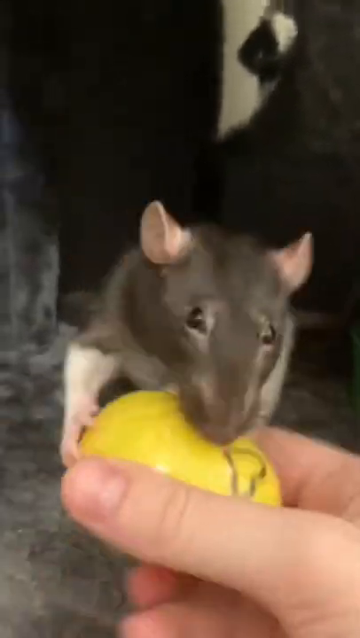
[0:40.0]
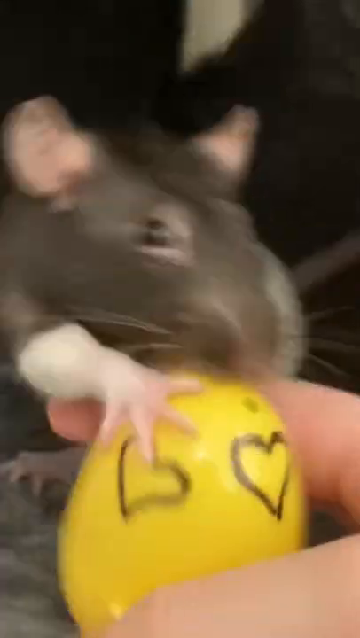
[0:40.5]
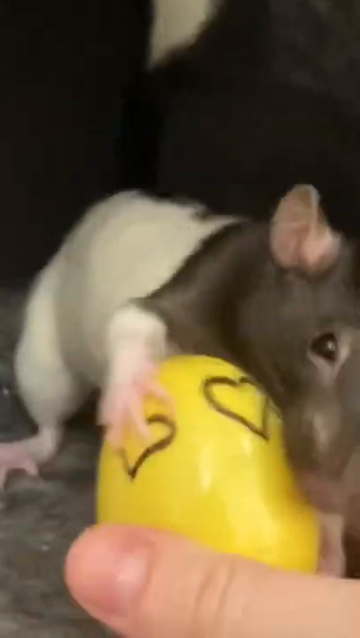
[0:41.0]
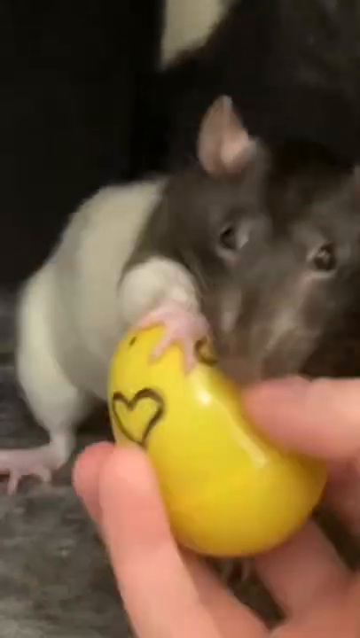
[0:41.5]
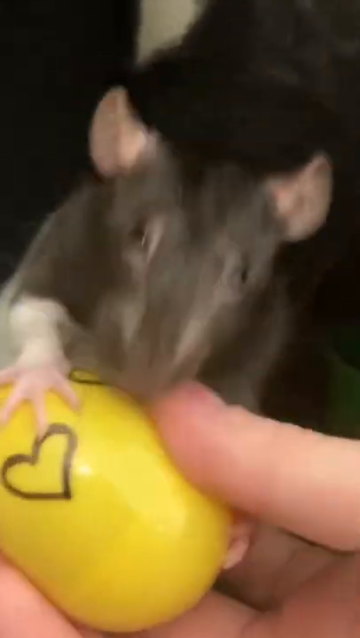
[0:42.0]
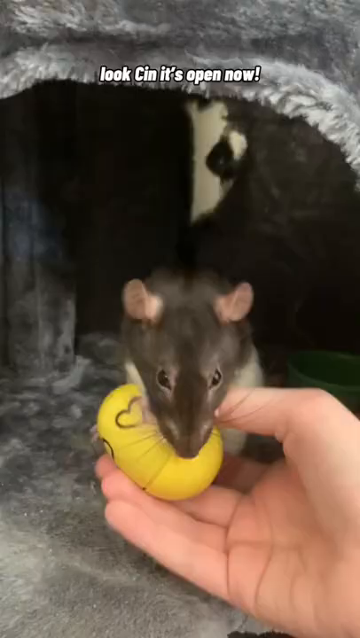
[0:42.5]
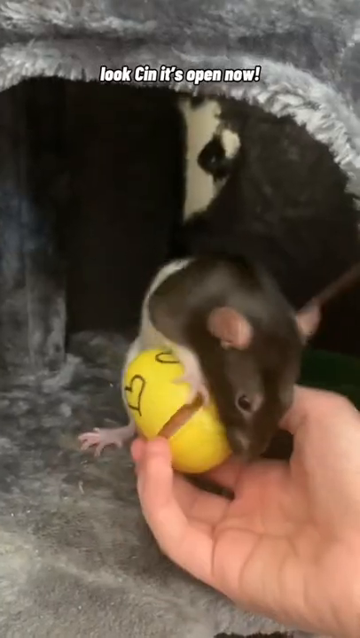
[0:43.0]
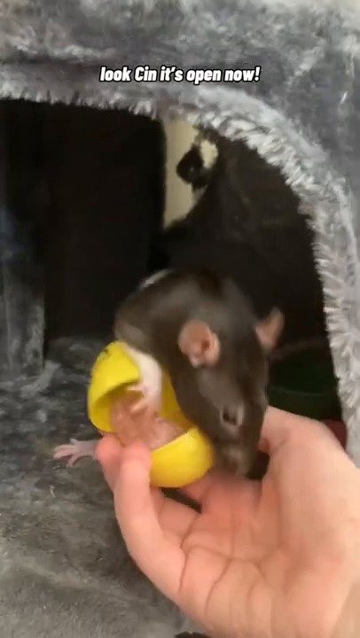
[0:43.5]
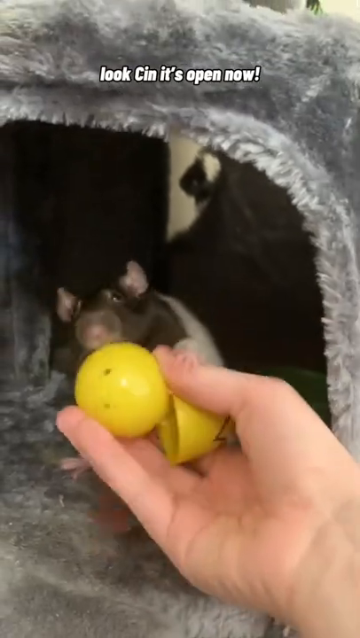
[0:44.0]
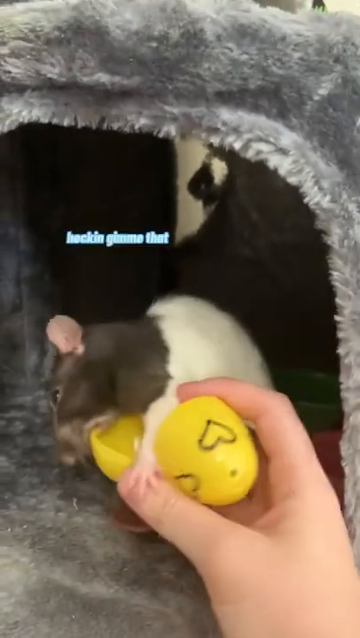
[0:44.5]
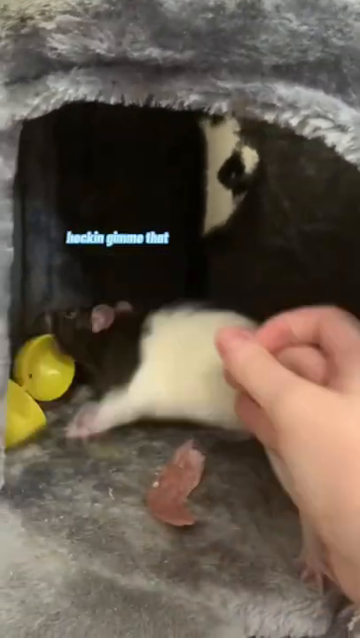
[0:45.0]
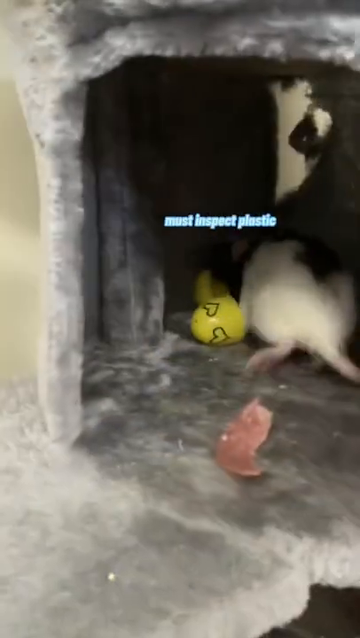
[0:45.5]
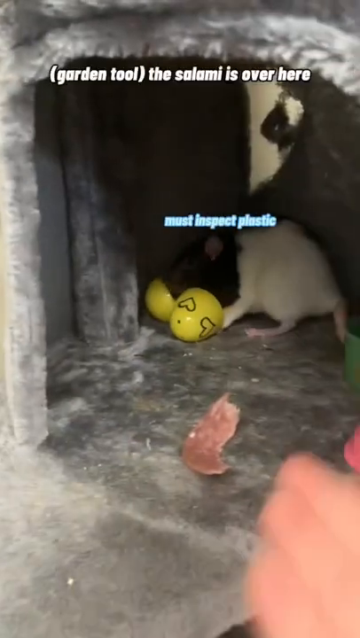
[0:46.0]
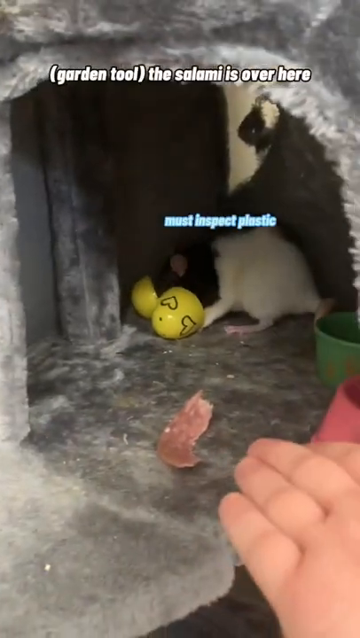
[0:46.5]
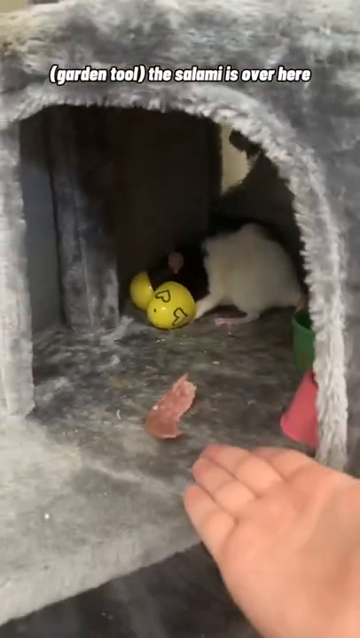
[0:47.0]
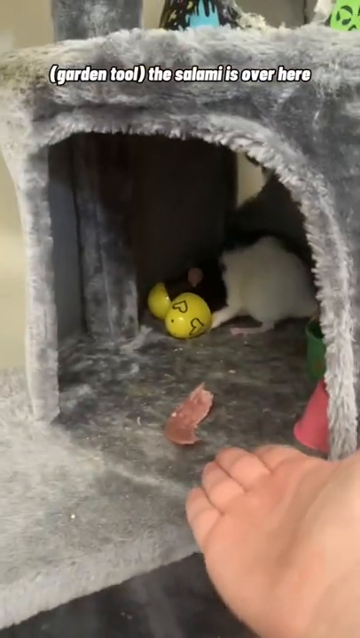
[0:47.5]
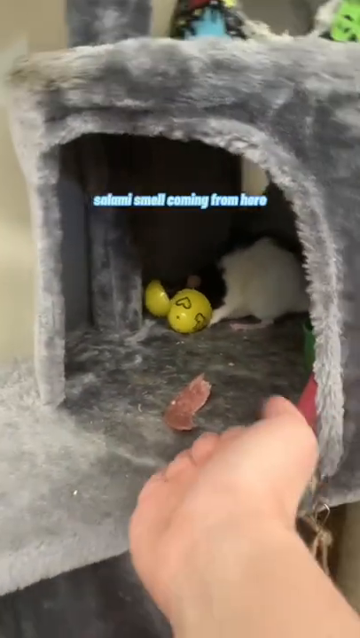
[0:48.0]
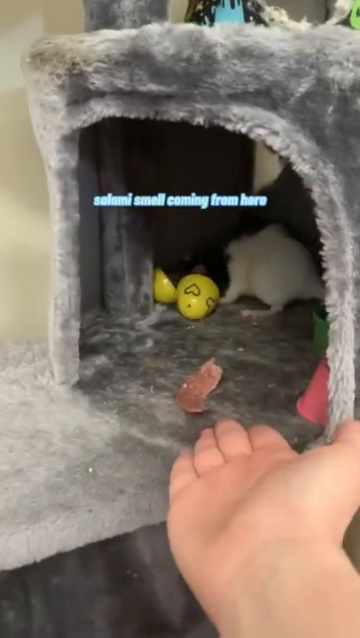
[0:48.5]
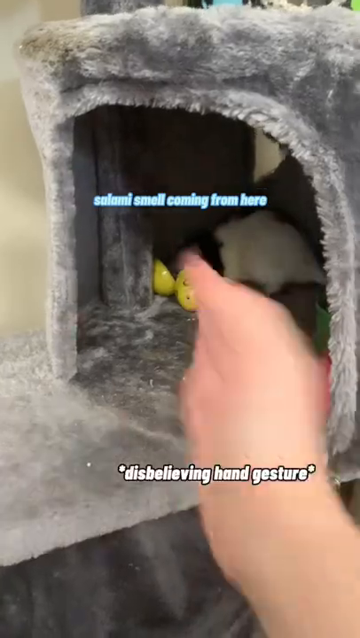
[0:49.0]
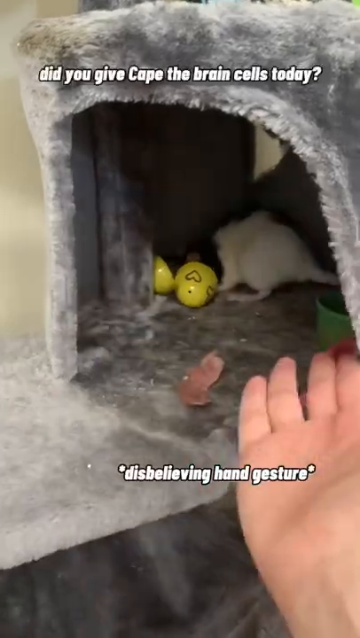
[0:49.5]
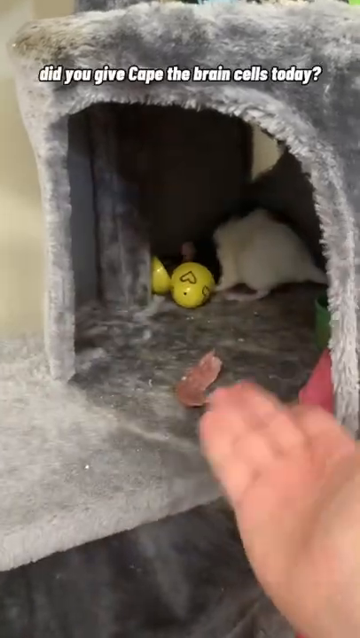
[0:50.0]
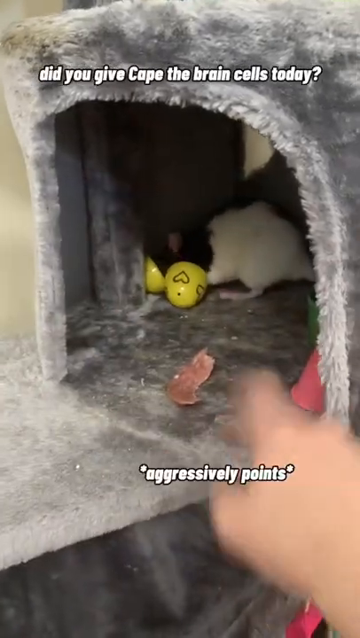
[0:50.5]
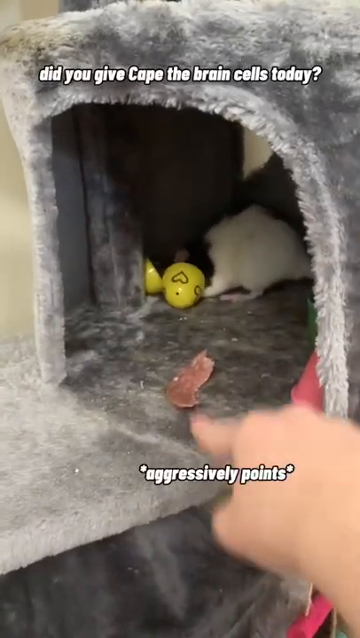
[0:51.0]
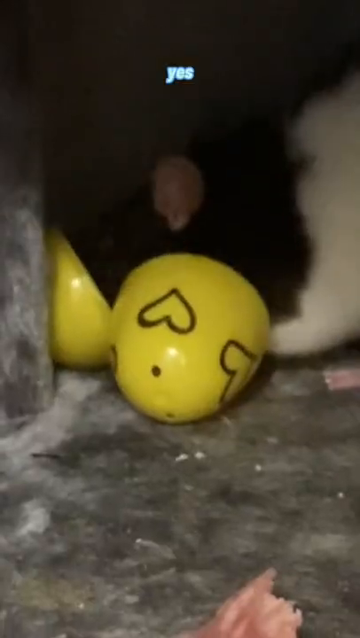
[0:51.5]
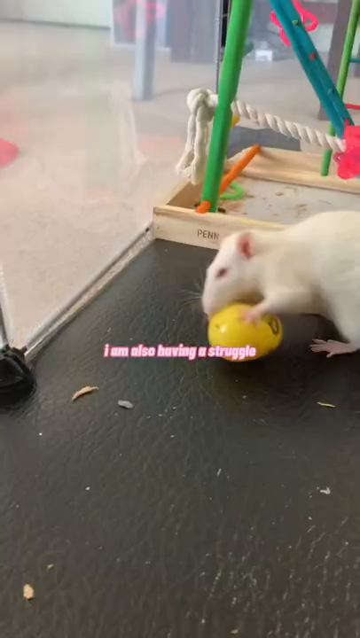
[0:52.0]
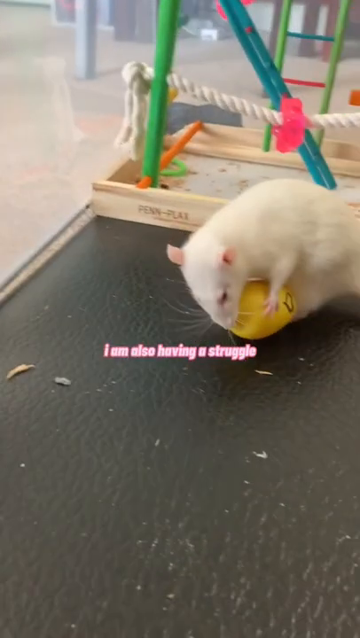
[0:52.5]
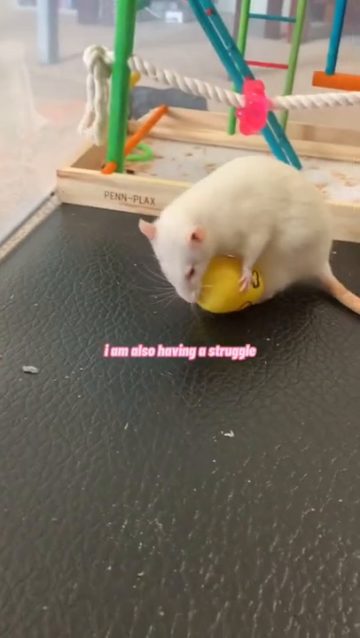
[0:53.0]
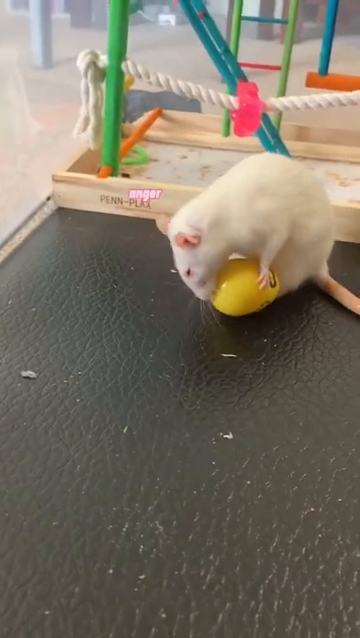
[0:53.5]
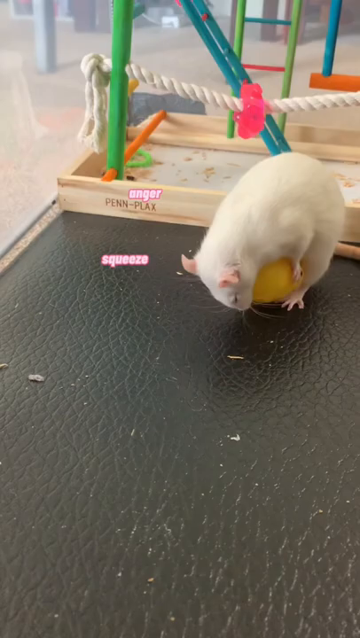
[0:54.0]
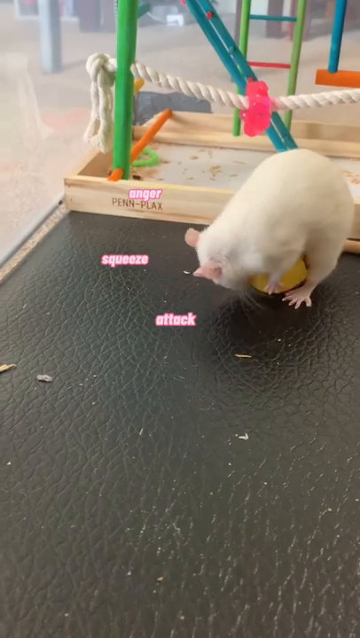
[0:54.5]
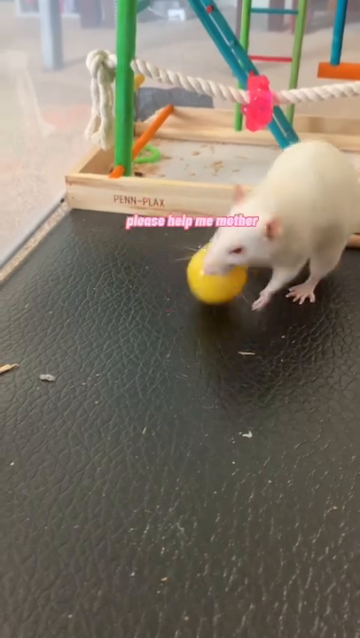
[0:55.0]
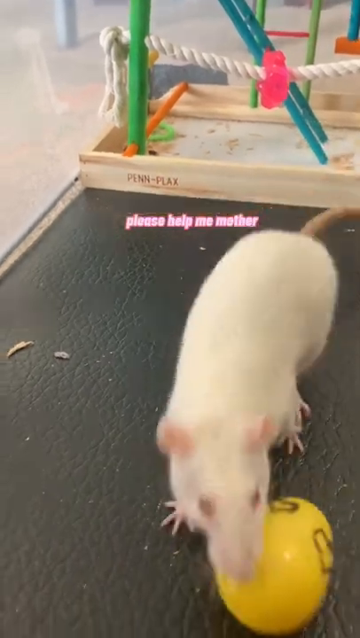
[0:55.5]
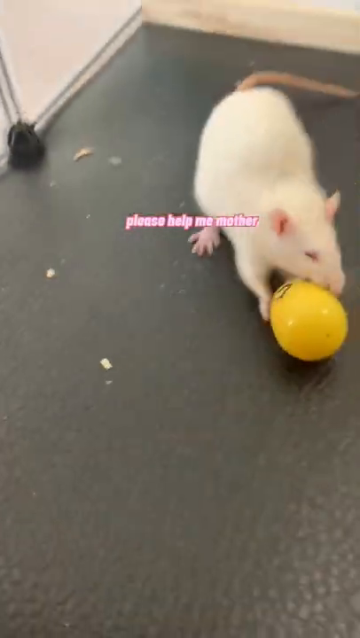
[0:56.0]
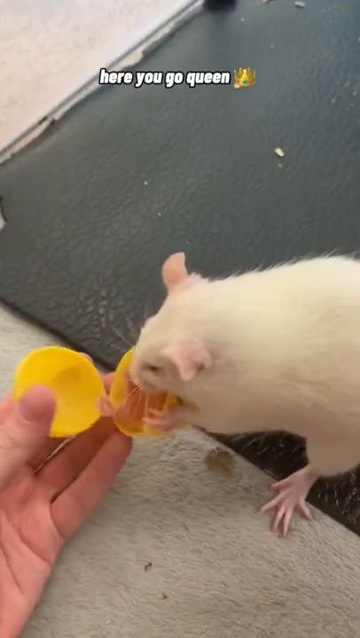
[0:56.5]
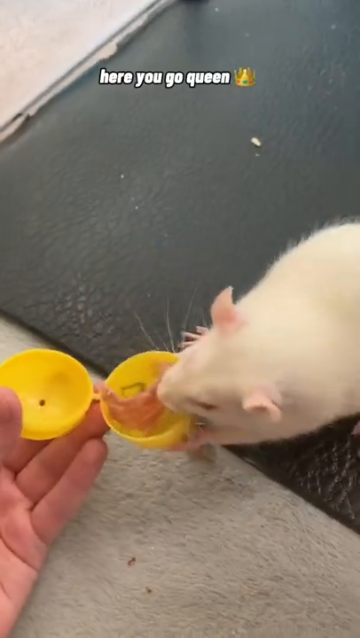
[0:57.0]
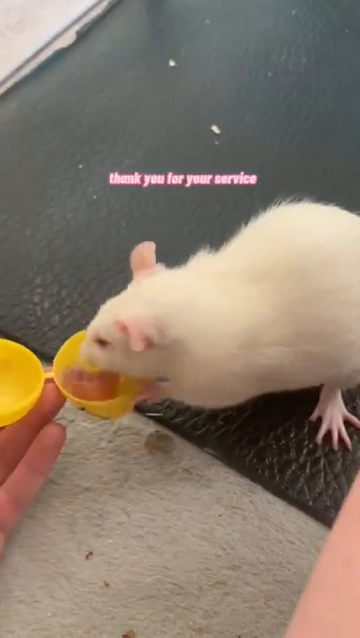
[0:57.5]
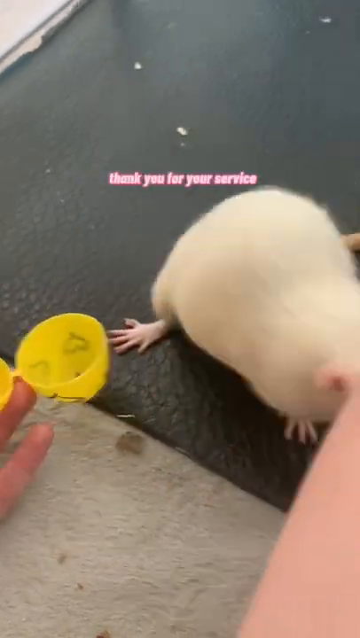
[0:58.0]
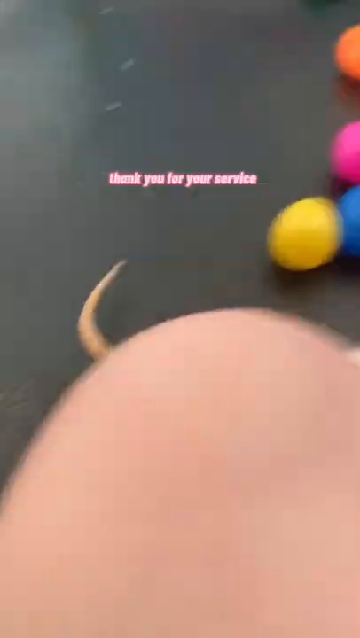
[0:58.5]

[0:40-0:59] The white and black rat is still holding on to the small yellow toy egg marked with heart eyes, which has the food in it, even though it was the white rat that found it. Eventually the owner manages to take the egg back and gives it to the white rat, which takes a little time, then opens the egg and takes the food for itself.